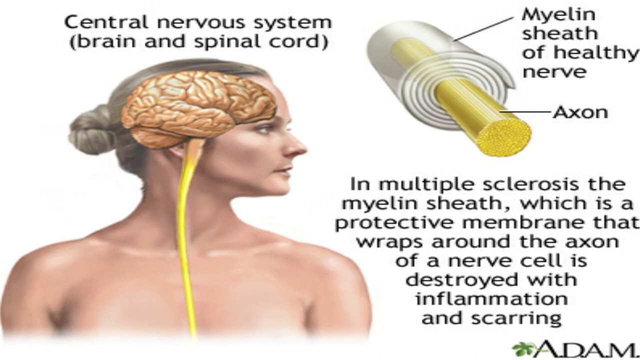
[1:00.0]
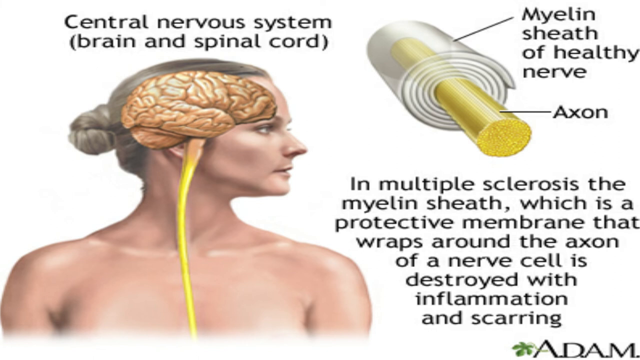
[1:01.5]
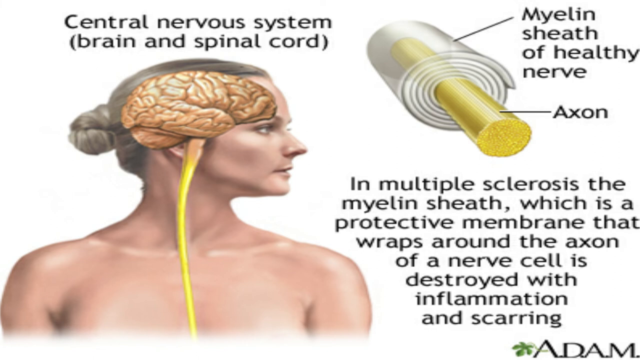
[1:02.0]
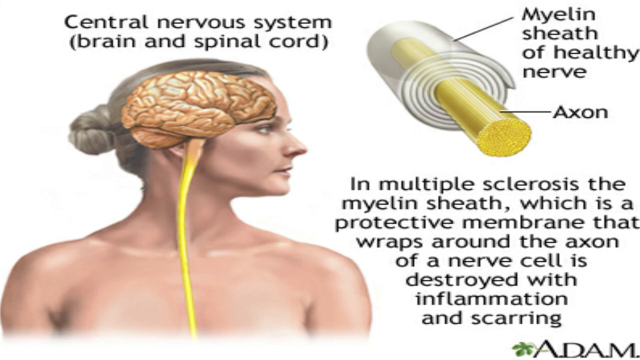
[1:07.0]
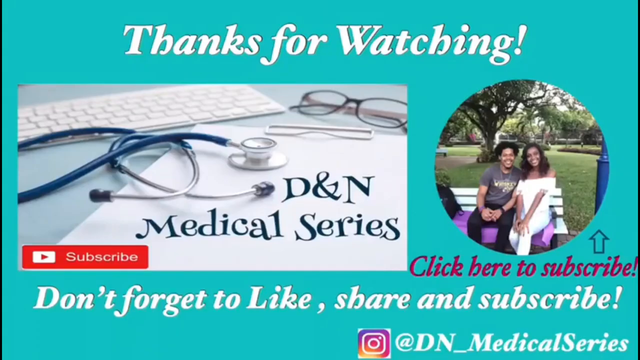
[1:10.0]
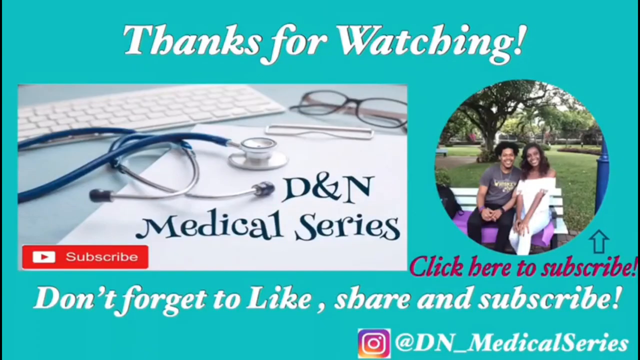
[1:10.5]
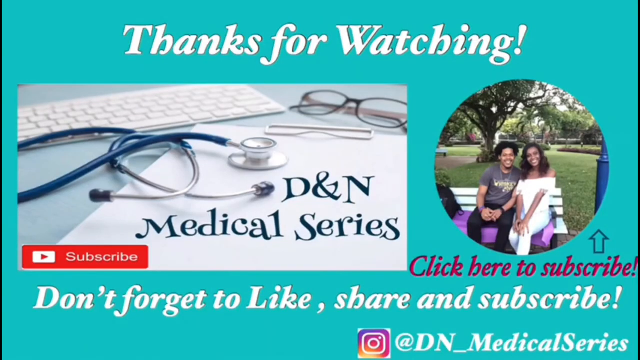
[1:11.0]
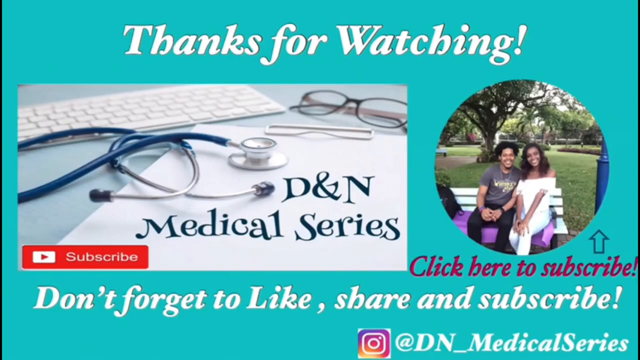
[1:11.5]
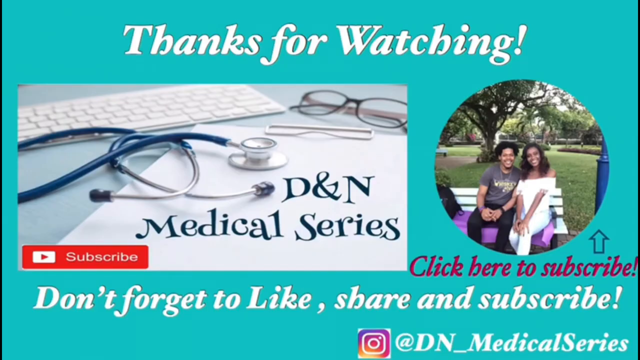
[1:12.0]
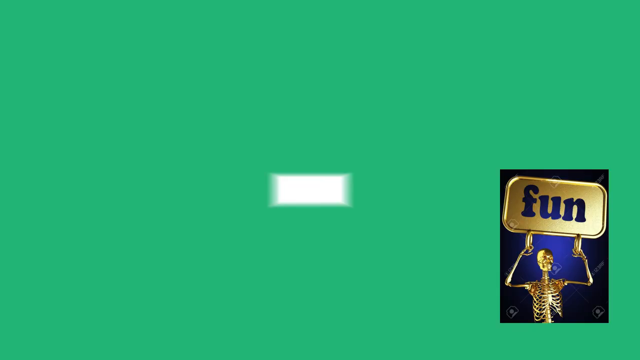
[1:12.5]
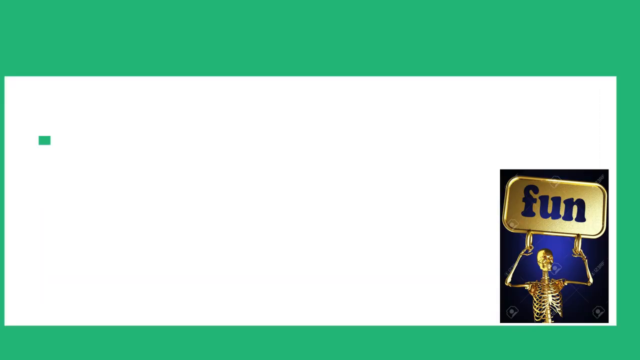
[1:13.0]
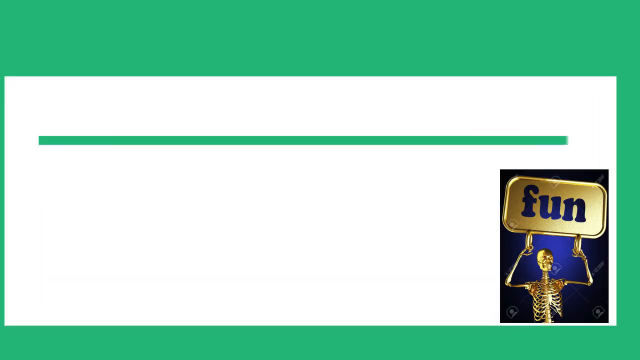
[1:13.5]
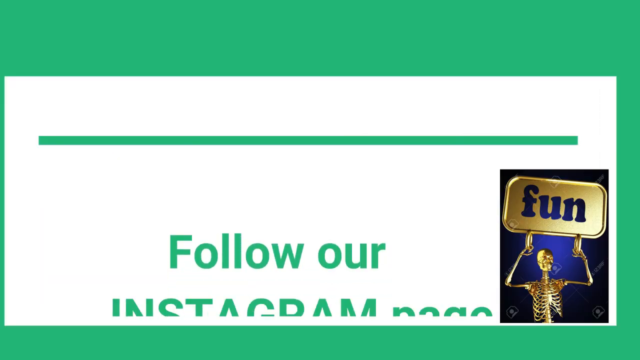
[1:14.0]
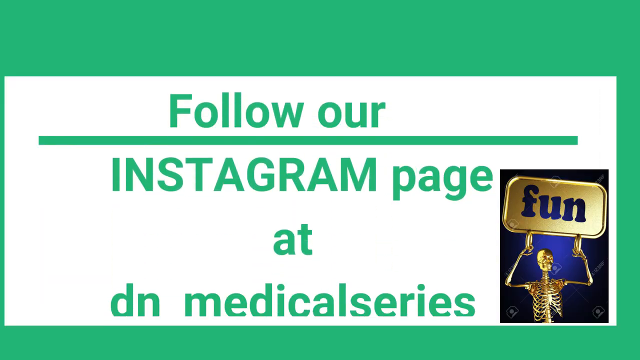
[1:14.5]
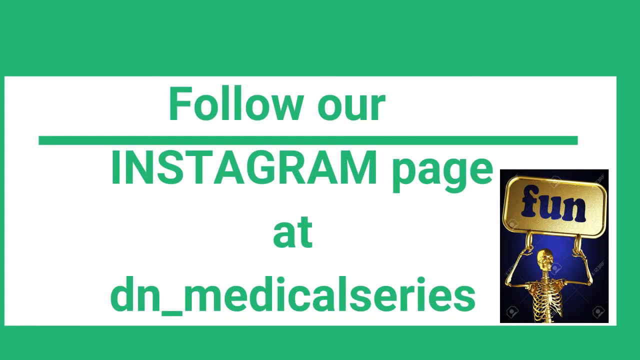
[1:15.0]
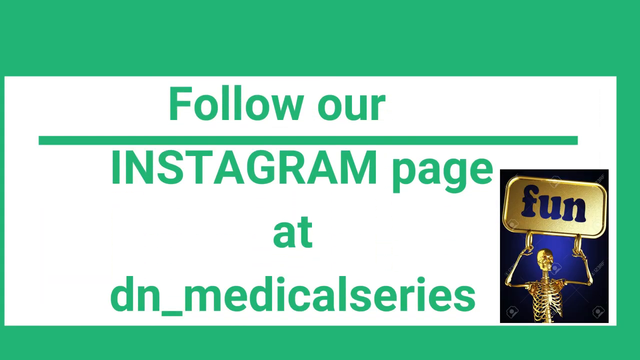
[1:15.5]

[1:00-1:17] On a white background, toward the left side, is a large image of a woman drawn like clip-art cartoon but realistic-looking, with her head turned to the side. Her brain looks like it is laying over the spot where the brain would be on her head; it is a light brown brain with lots of lines on it, and a long yellow brain stem or spine goes down from it. At the top right of the screen is a nerve that looks like a long yellow rod with a white or light gray sheet wrapping around it; the sheet is labeled "myelin sheath of healthy nerve" and the rod is labeled "axon." Black text on the bottom right of the screen says "In multiple sclerosis, the myelin sheath which is a protective membrane that wraps around the axon of a nerve cell is destroyed with inflammation and scarring." The screen changes to a teal background with "thanks for watching" in white letters at the top. Underneath is an image of what looks like a desk with a white matte keyboard somewhat toward the top of the desk, a pair of black-framed glasses, a stethoscope, and a clipboard. Toward the bottom of that image it says "DN Medical Series," and a red YouTube subscribe button is at the bottom left of the image. On the right side is a circular frame containing an image of what looks like a young Black man and Black woman, and underneath the circle small purple letters say "click here to subscribe." At the bottom of the page, larger white letters say "don't forget to like, share, and subscribe." On the bottom right-hand side of the page is the Instagram logo and the Instagram handle DN_Medical Series. The screen then changes to a green background, and a large white rectangular box pops up that says "follow our Instagram page at DN_medical series." To the right of that is a small picture of what looks like a skeleton from the waist up, holding above its head a sign that looks like a flat, gold rectangular shape with "fun" on it in lowercase blue letters.